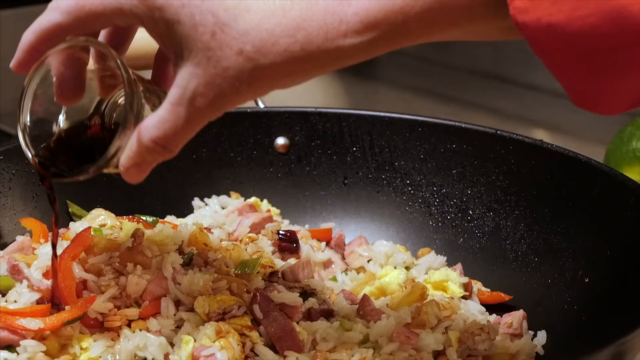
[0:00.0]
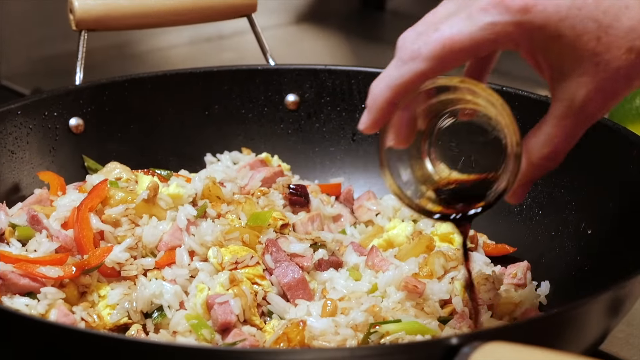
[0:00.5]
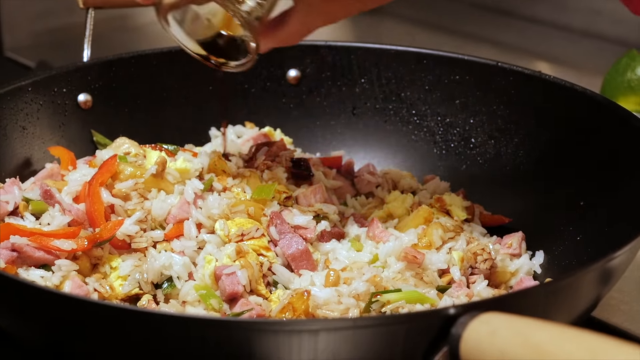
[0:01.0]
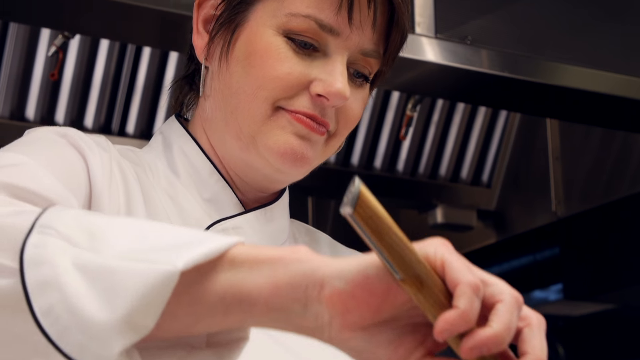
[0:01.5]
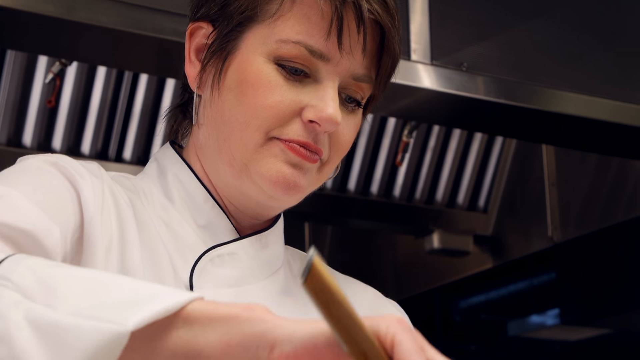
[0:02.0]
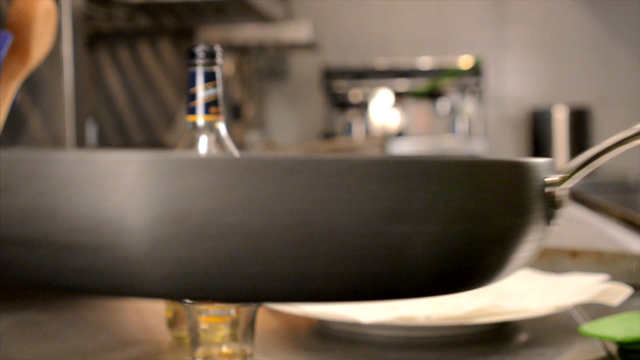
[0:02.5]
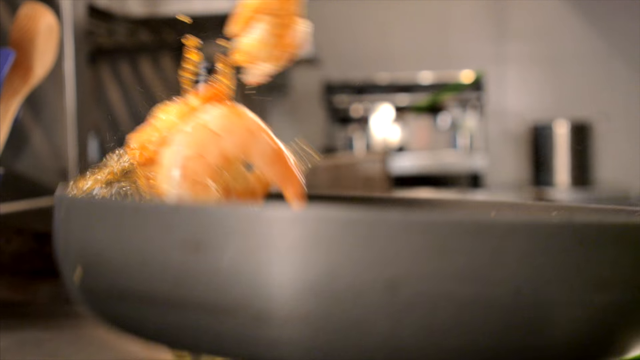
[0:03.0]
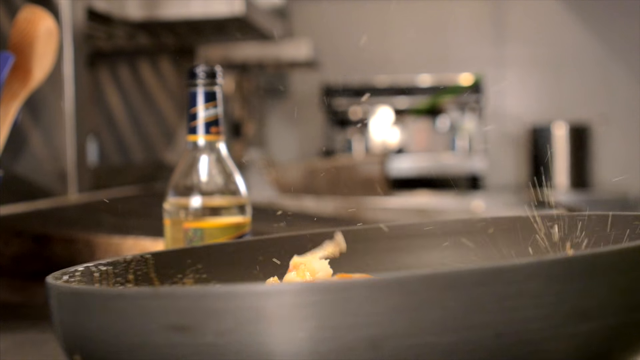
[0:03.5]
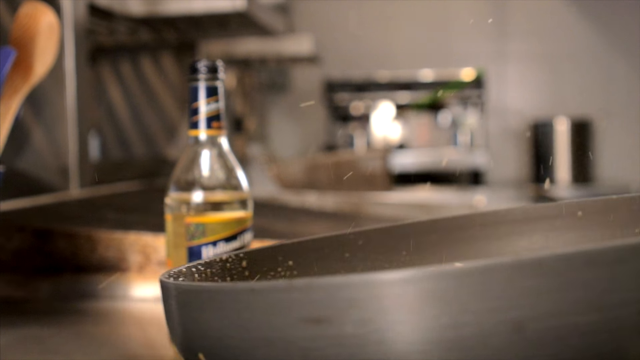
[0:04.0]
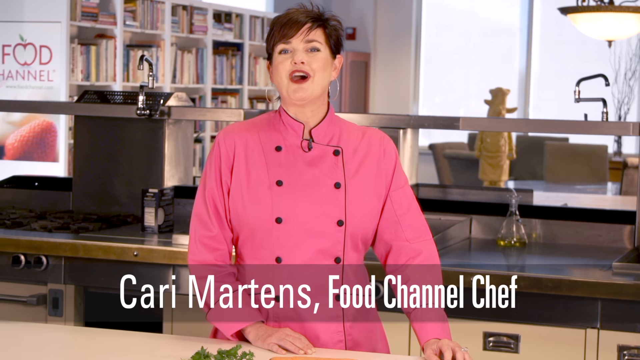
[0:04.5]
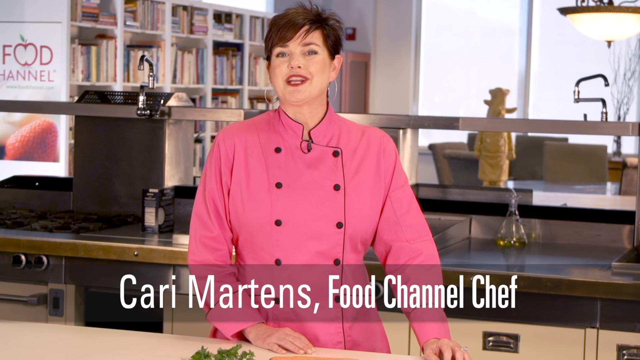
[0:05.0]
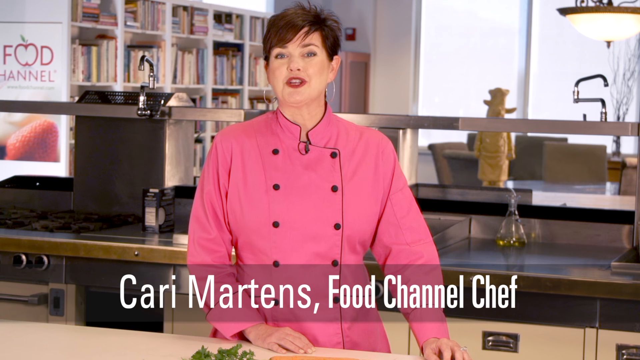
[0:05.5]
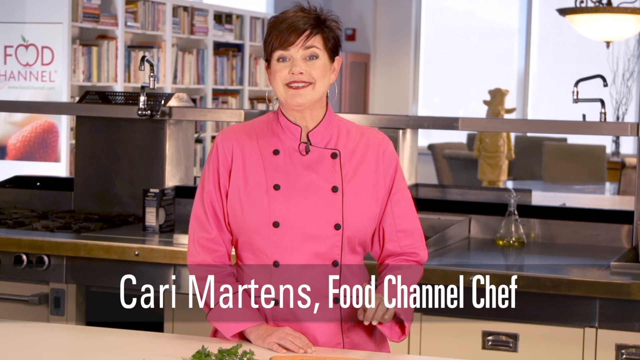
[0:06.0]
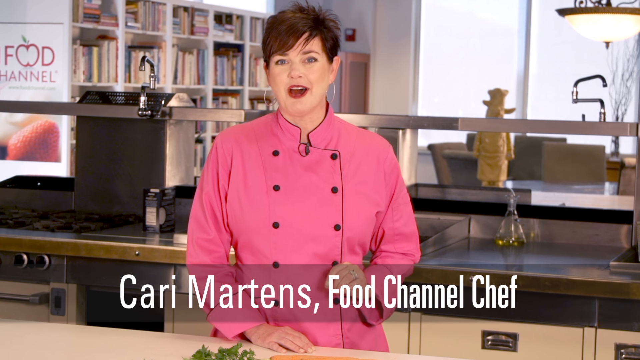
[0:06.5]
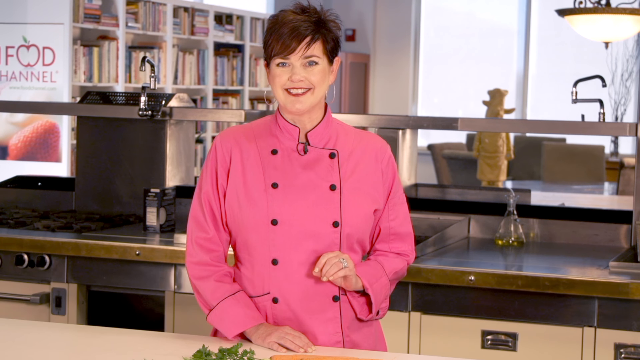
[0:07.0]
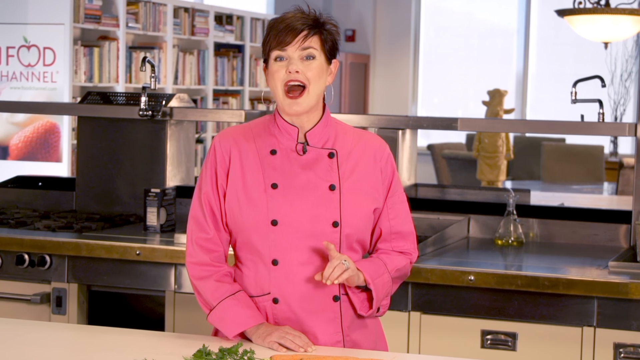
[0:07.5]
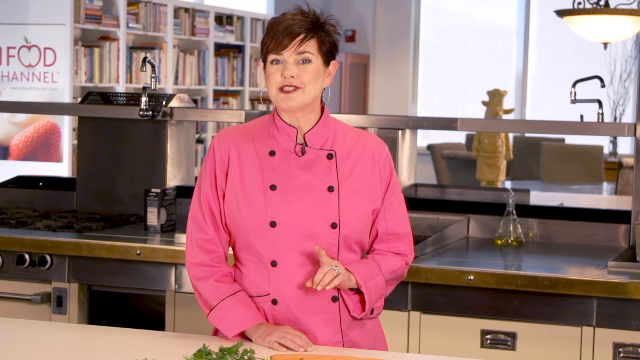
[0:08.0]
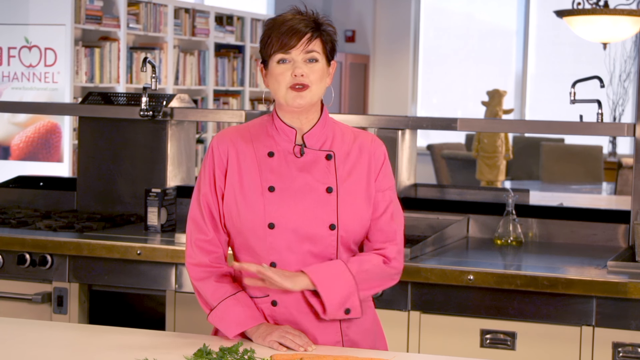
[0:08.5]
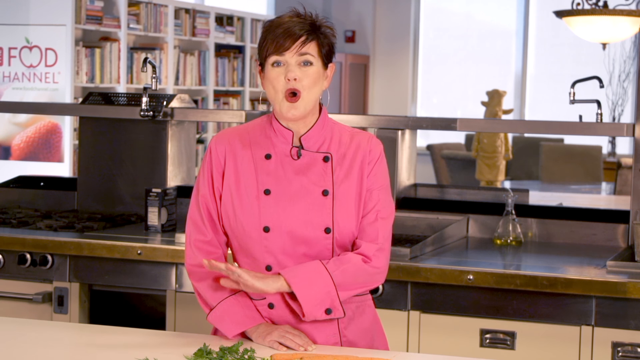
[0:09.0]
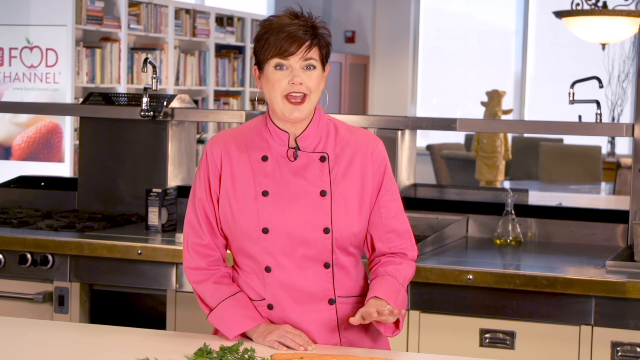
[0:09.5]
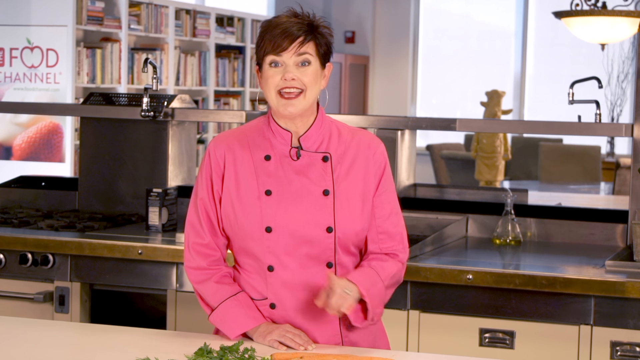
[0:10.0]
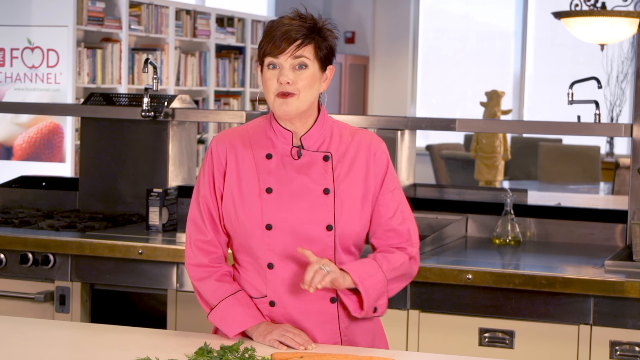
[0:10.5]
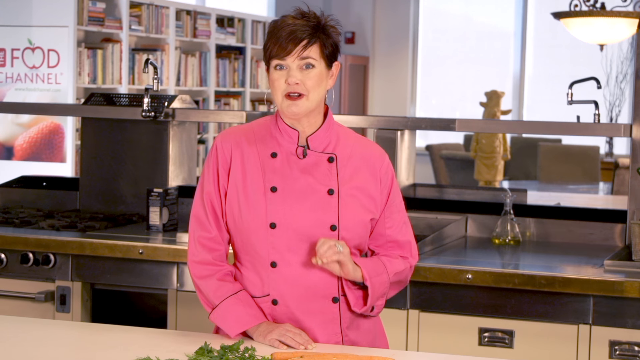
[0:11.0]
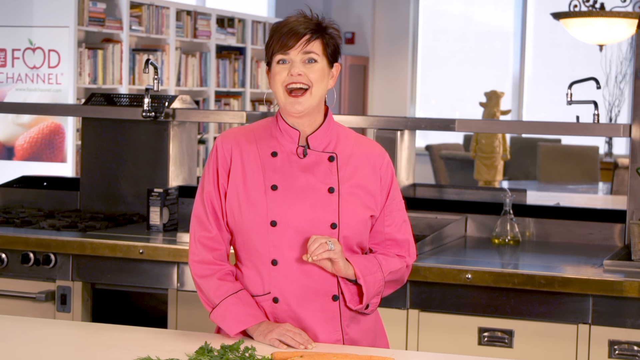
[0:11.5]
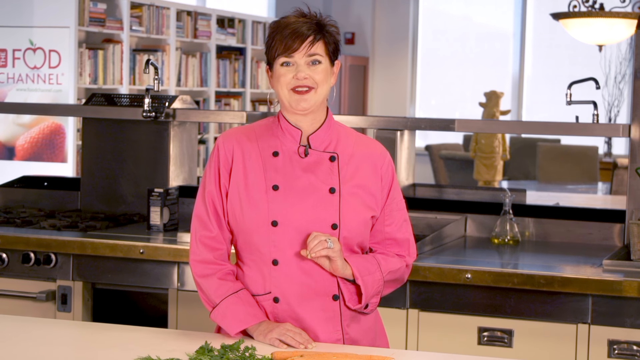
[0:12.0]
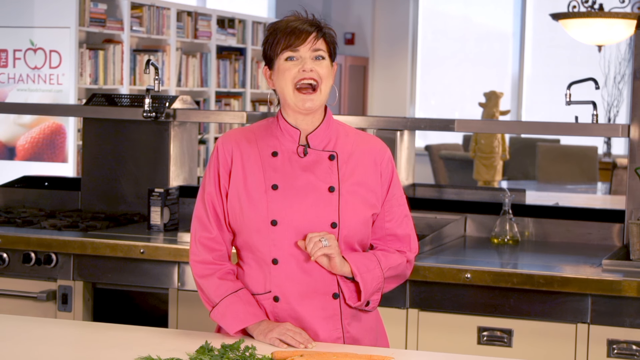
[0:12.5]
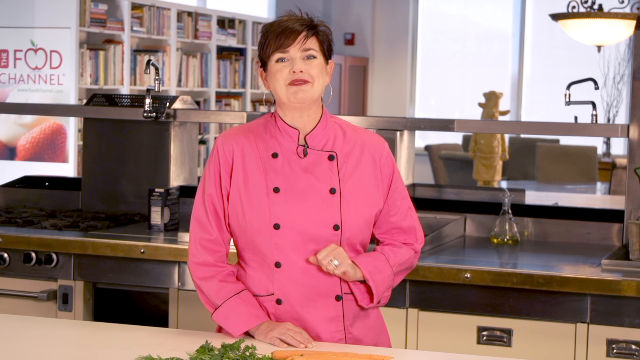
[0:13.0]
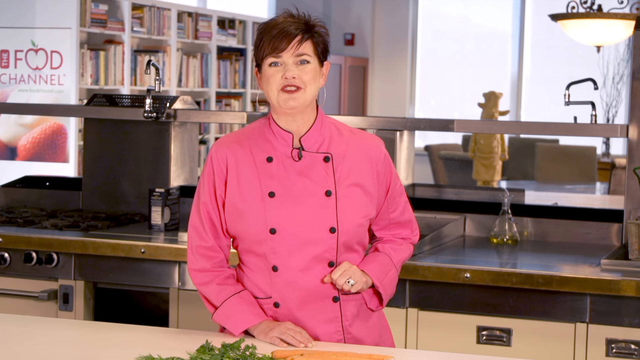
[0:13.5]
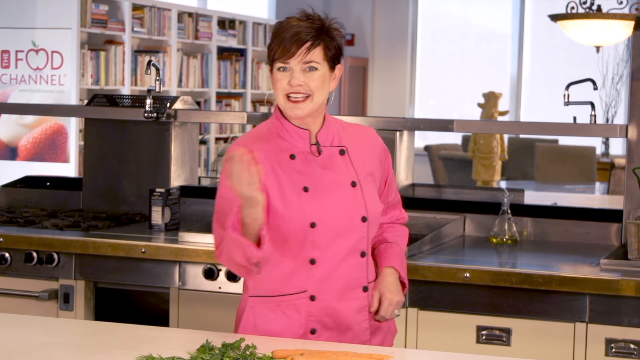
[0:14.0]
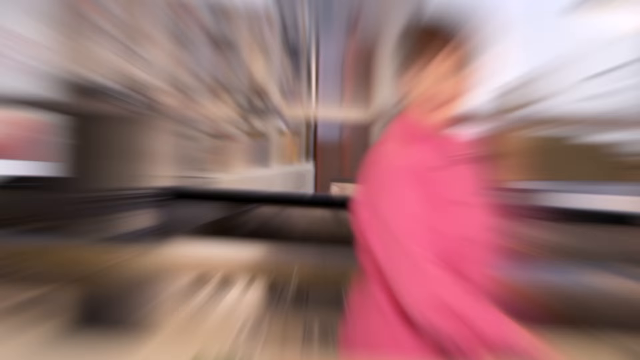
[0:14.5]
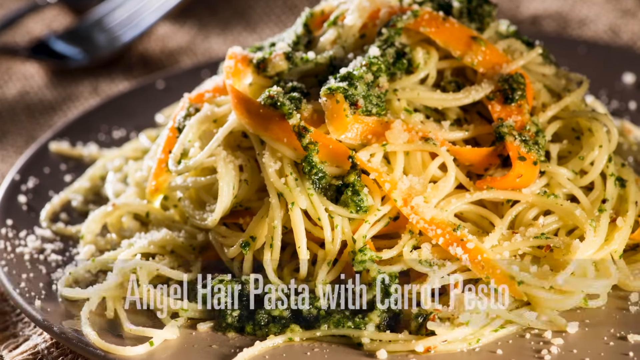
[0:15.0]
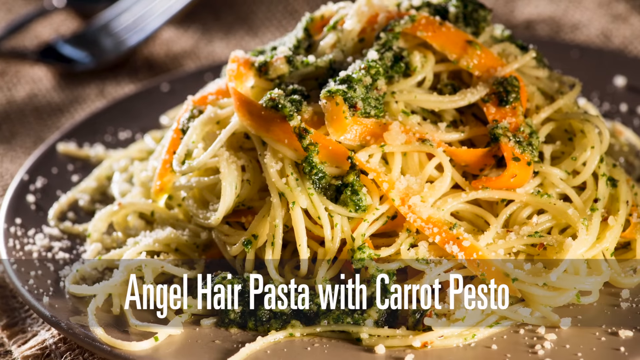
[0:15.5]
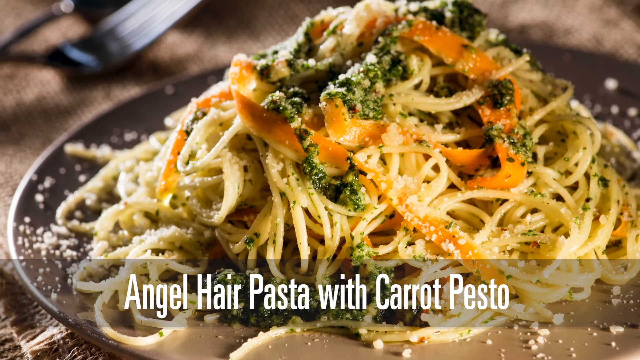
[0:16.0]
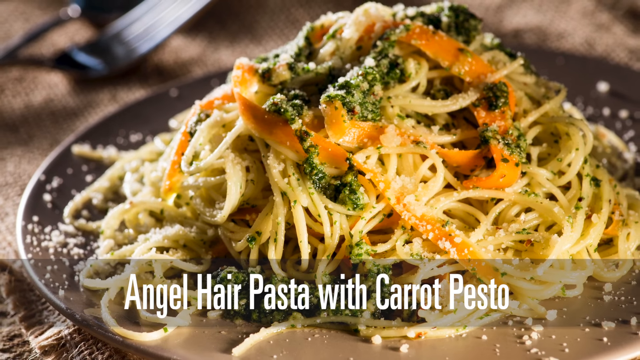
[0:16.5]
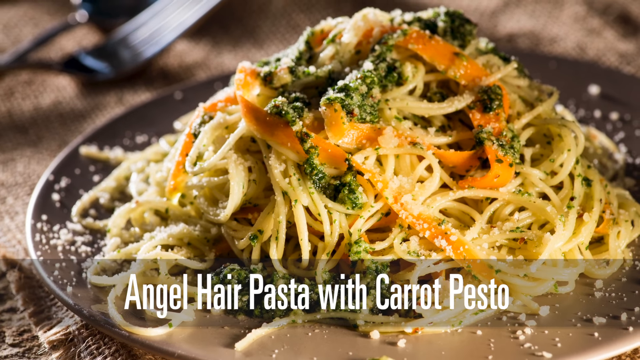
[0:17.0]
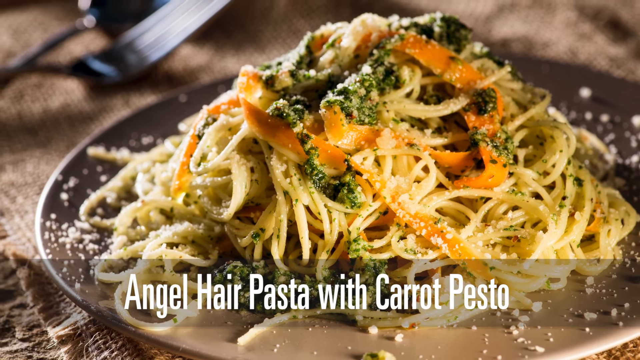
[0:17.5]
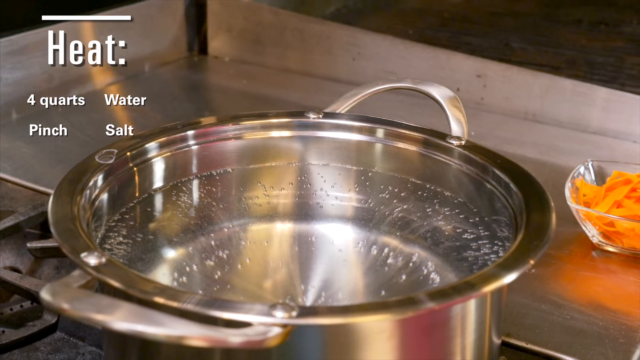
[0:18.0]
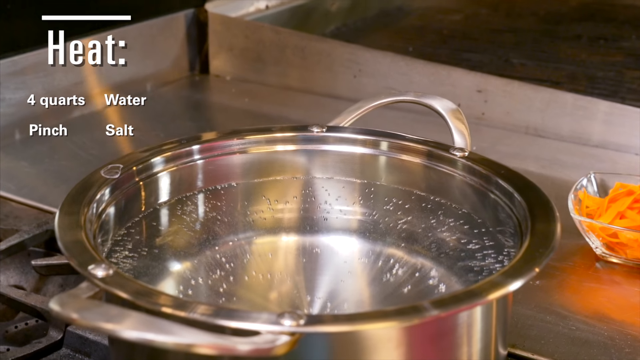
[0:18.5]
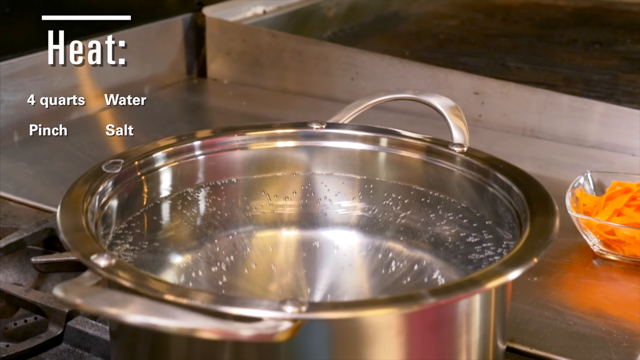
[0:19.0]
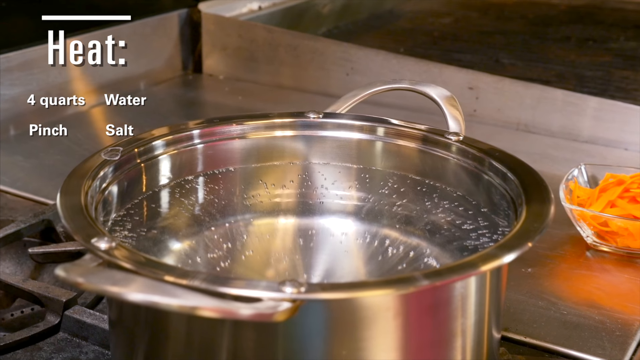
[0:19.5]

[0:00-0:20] The video opens on a close image of a hand in a red sleeve pouring soy sauce over what looks like a wok full of food; the soy sauce seems to be added in a circular motion. The shot changes to a woman's face looking down at the wok; she seems concentrated and is mixing. Next, the wok is used in a technique that tosses the food up and back into the wok or pan. The scene then shifts to a woman with short hair and a pink shirt looking directly at the camera. She seems to be in some kind of book room, with shelves full of books to her left and tables with chairs to her right. A low-opacity overlay at the bottom reads "Kari Martens, Food Channel Chef". She talks while making finger and hand gestures, then gestures with her hand as if to say "come on." A close-up of a dish follows: it looks like noodles with carrots and tiny green vegetables sprinkled across them. Right below it, a low-opacity black text box reads "angel hair pasta with carrot pesto" in white text, and the camera zooms out. The scene then shifts to a metal pot on a stove with "heat" in white text in the top left corner.